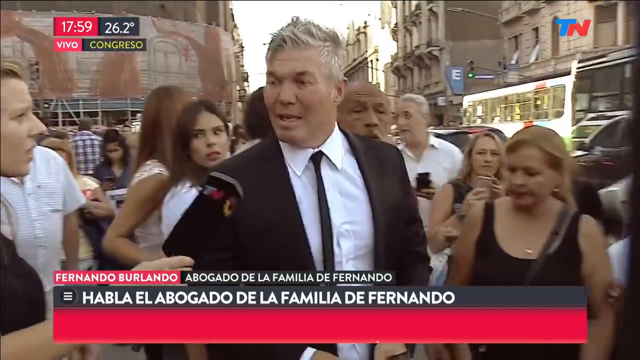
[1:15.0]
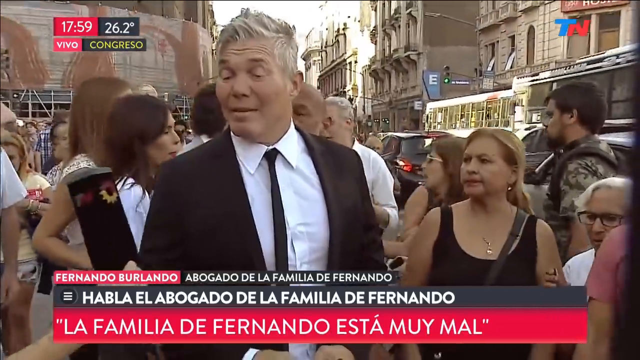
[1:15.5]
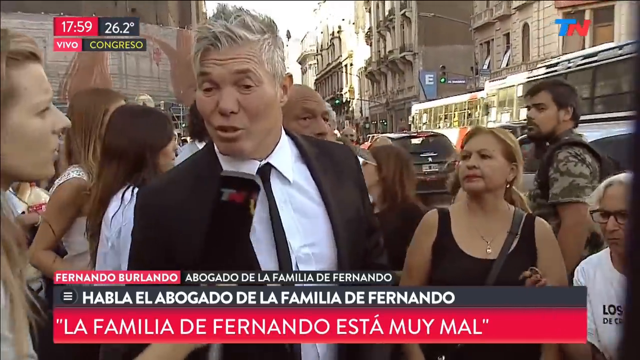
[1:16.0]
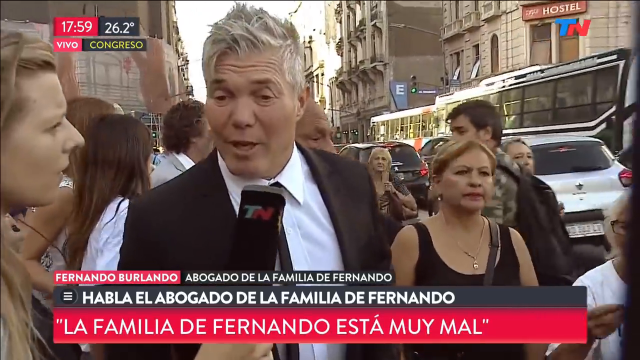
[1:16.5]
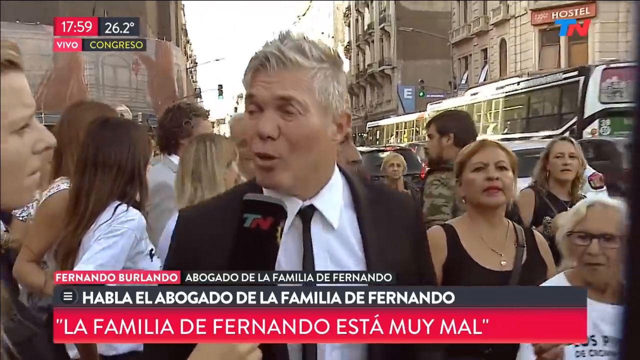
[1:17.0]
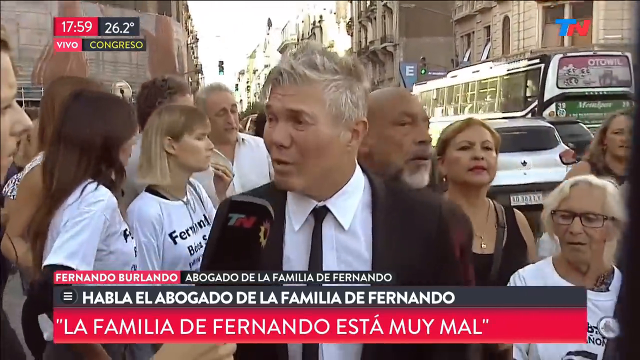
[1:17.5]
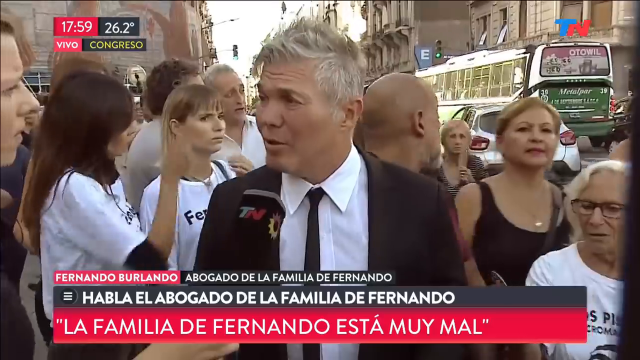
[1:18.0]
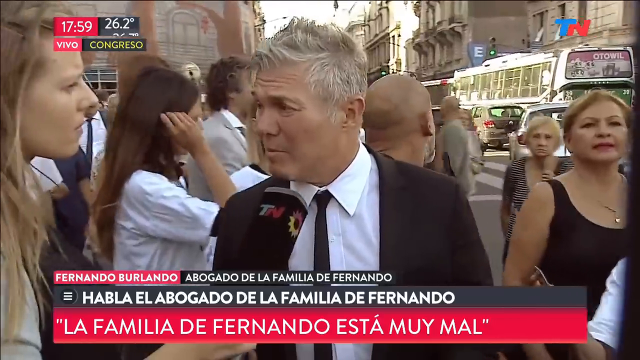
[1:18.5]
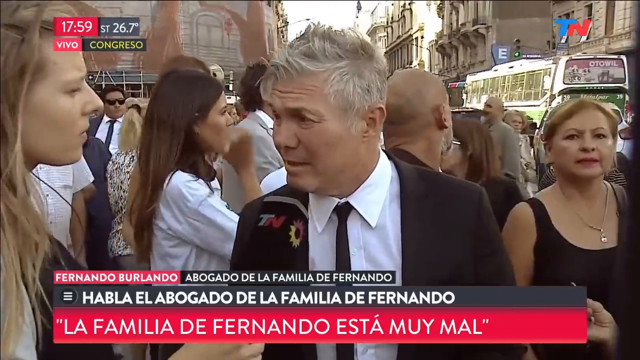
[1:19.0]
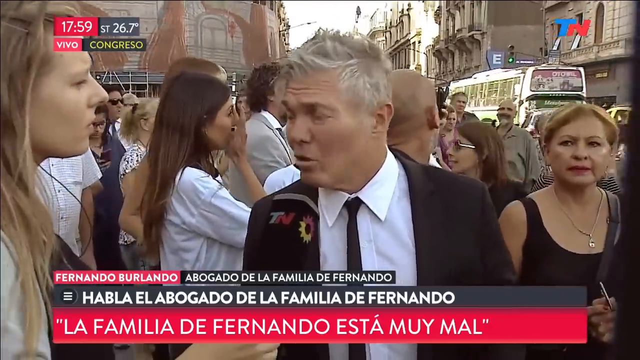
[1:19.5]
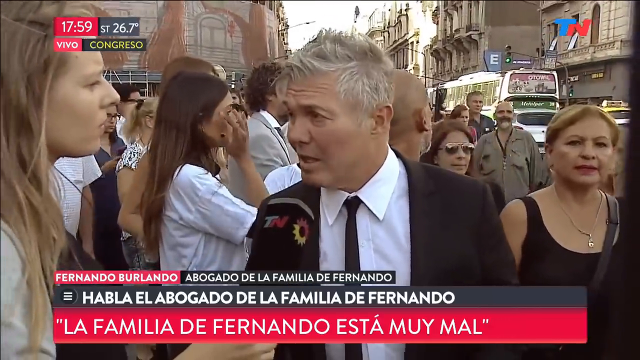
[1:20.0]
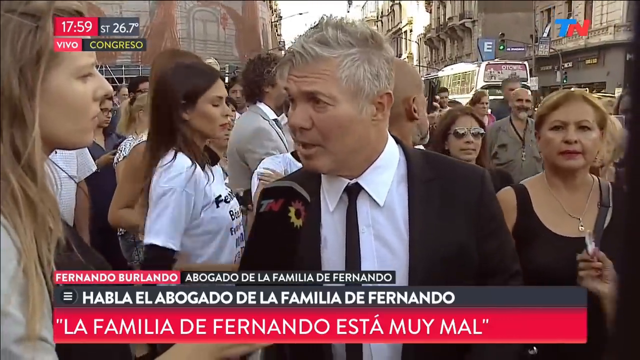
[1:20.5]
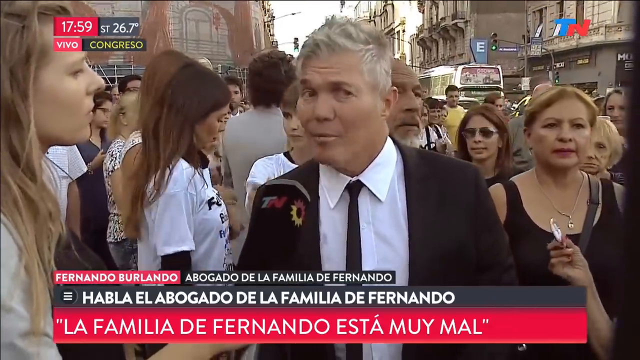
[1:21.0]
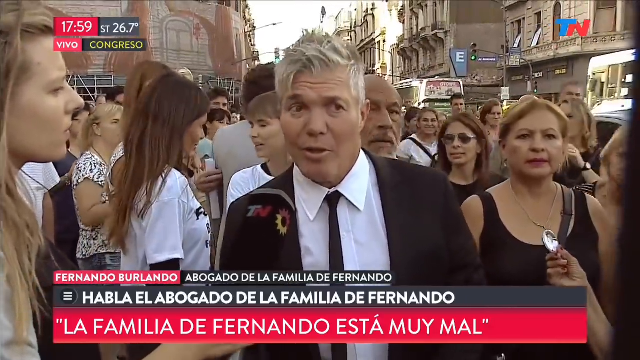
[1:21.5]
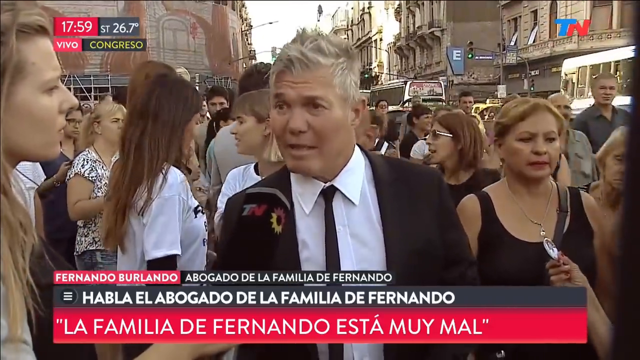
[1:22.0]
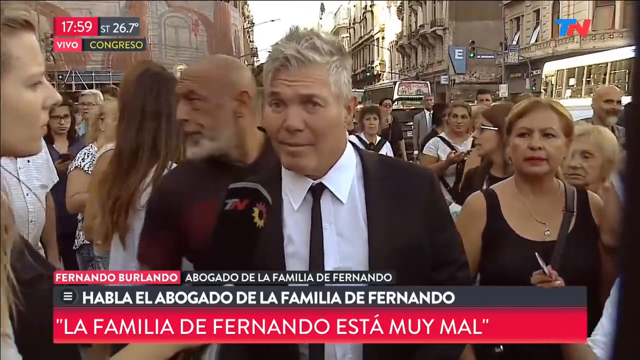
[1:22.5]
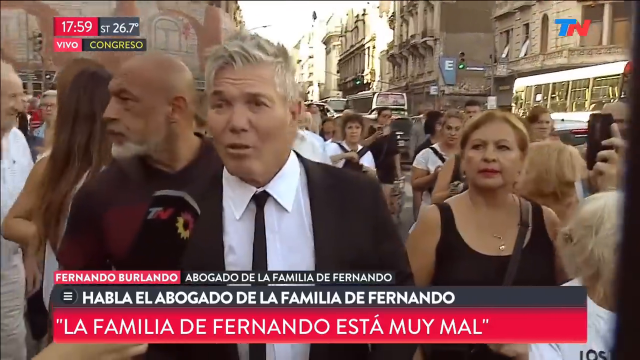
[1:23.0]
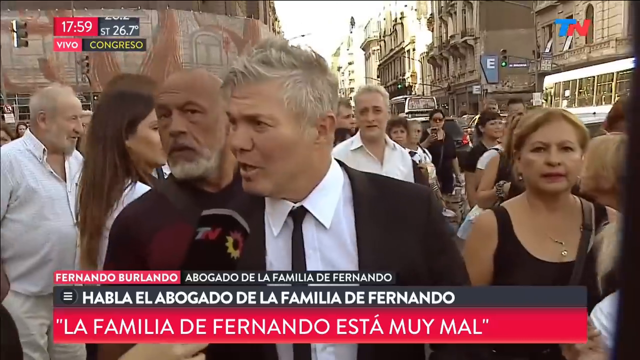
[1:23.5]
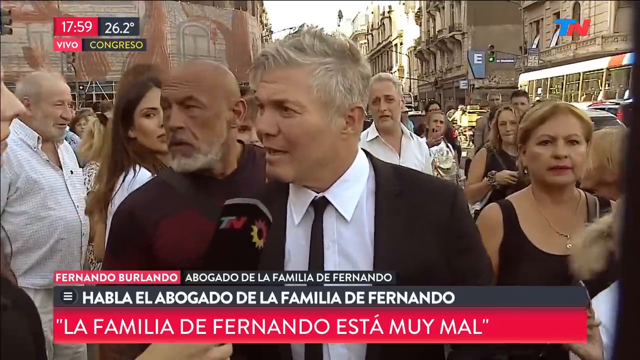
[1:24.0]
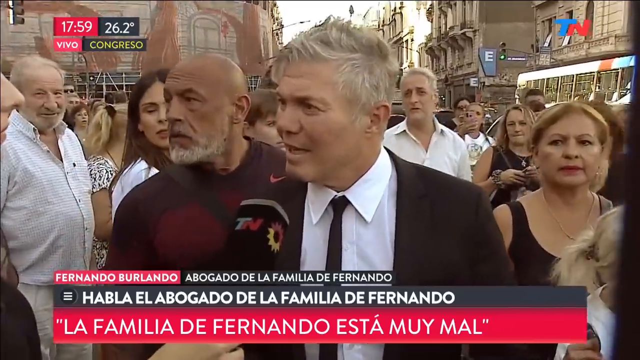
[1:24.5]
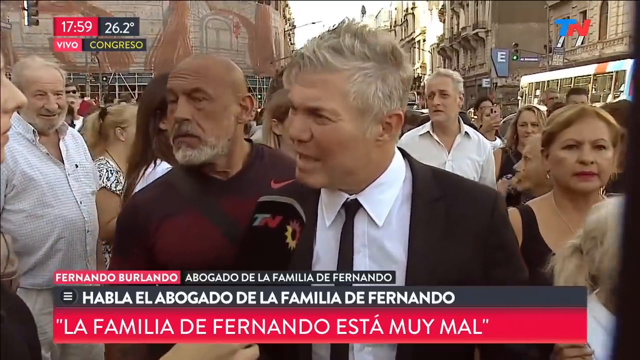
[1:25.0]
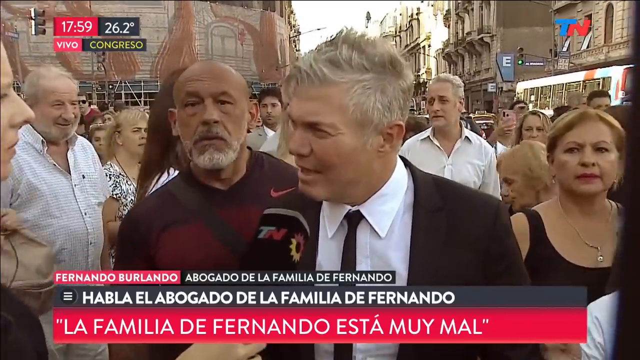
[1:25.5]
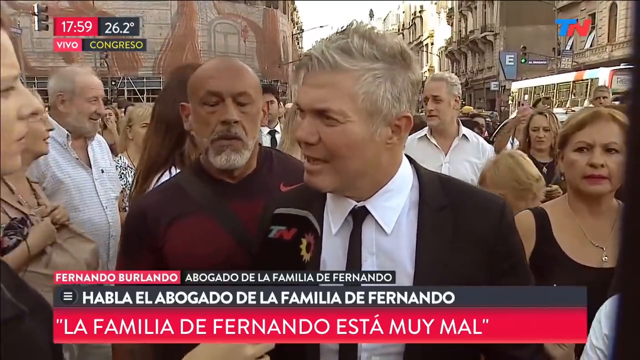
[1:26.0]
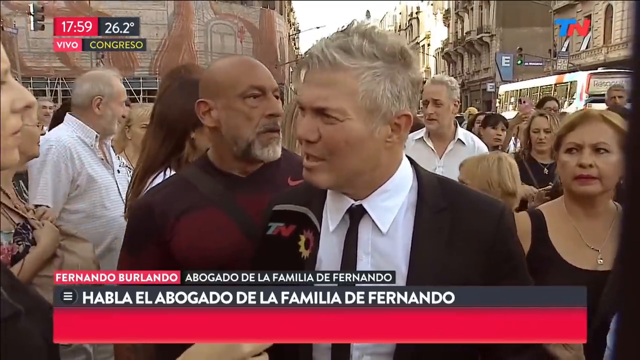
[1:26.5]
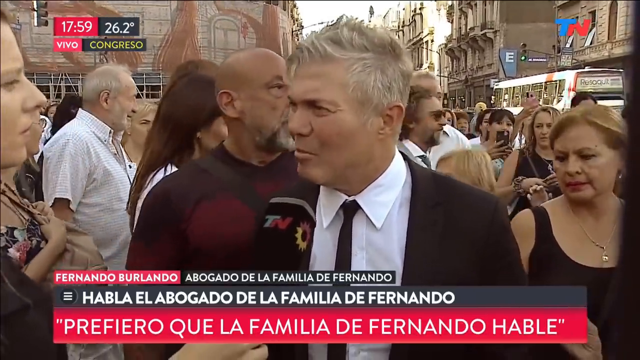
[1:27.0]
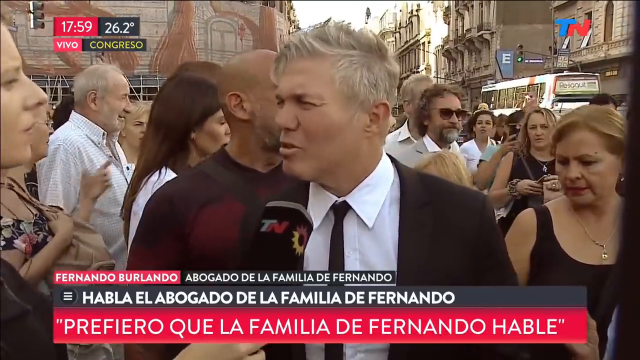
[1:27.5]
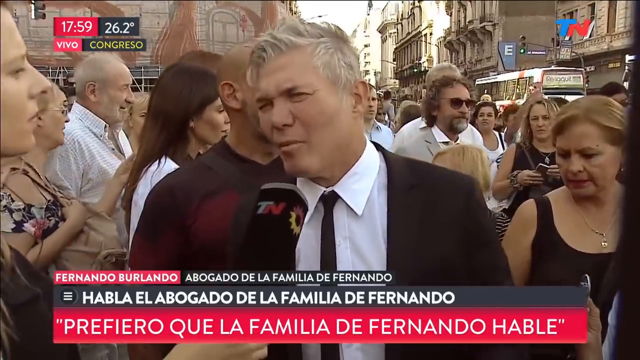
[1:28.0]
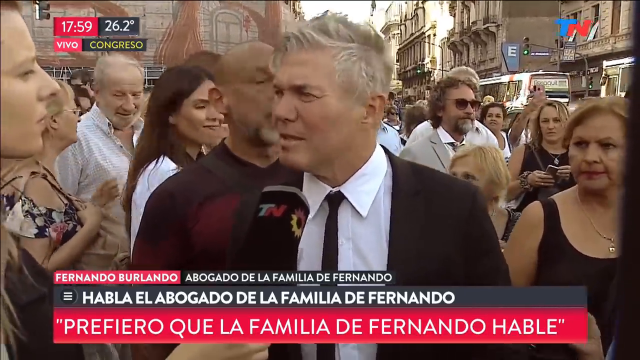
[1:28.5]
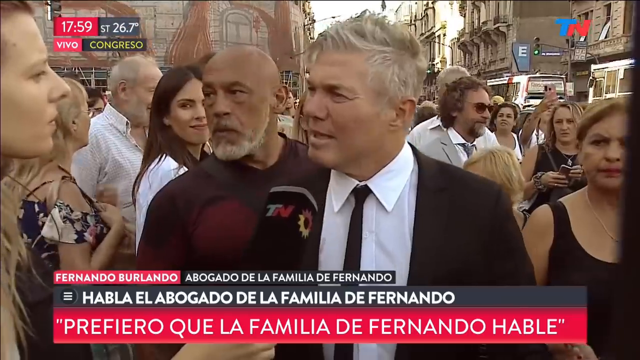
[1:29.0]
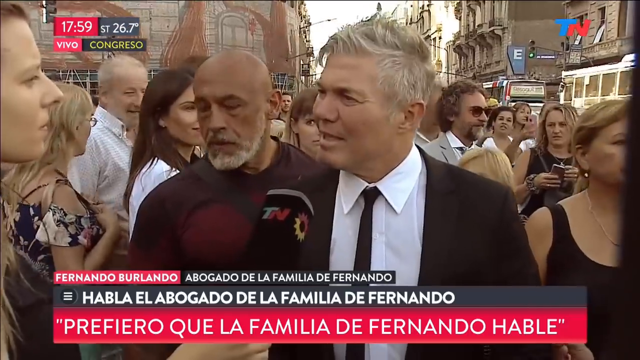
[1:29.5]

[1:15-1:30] A man with short gray hair, who looks to be in his 50s or 60s, wears a black suit, a white shirt, and a black tie. His body faces the camera, but for the most part his head is turned toward a woman slightly off-frame to the left who holds the microphone he speaks into; she looks like a newscaster interviewing him. He has a serious expression and is very expressive with his face, nodding, shaking his head, and looking around. A crowd is behind him, along with a large city with towering buildings.